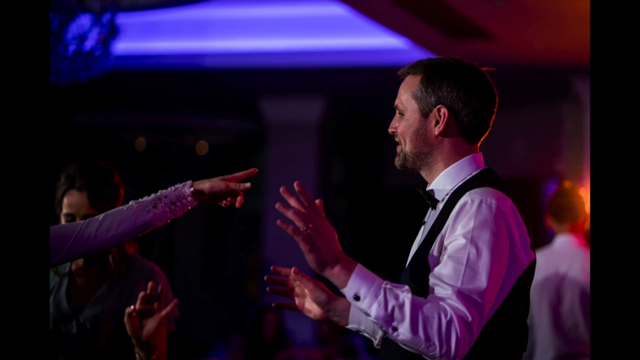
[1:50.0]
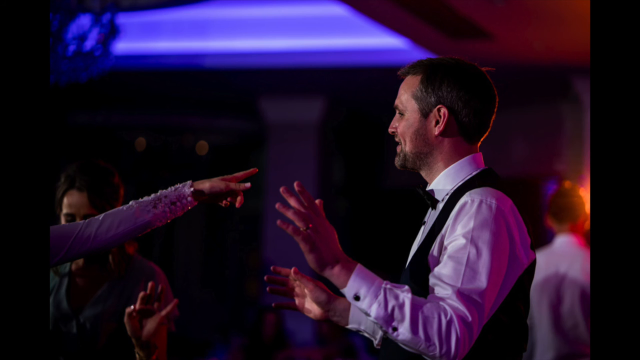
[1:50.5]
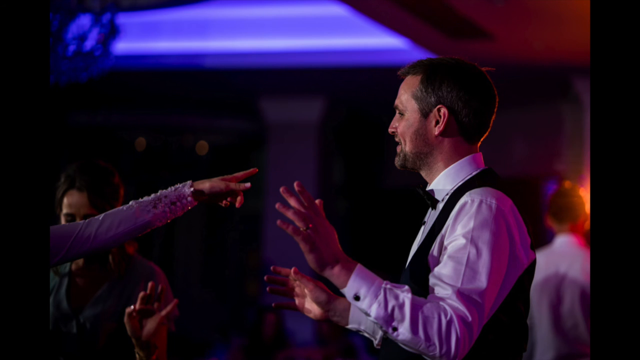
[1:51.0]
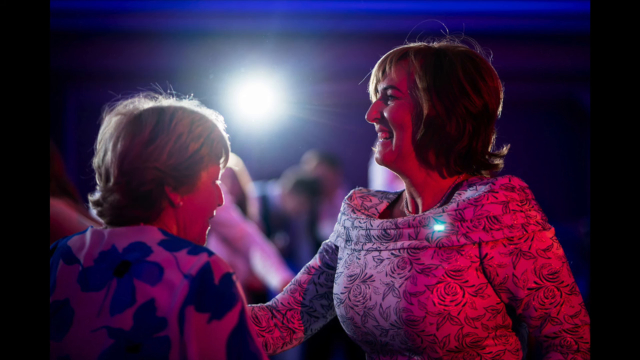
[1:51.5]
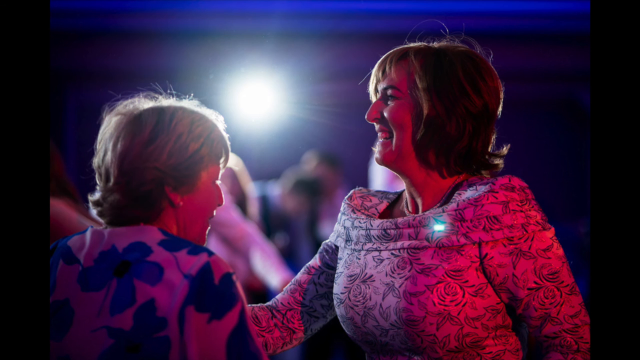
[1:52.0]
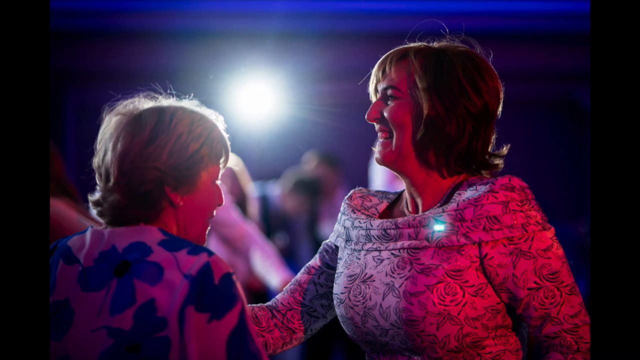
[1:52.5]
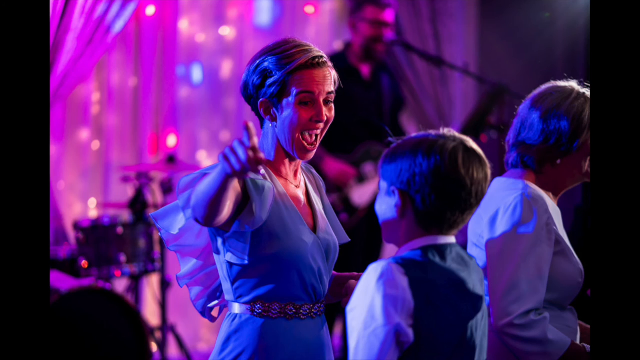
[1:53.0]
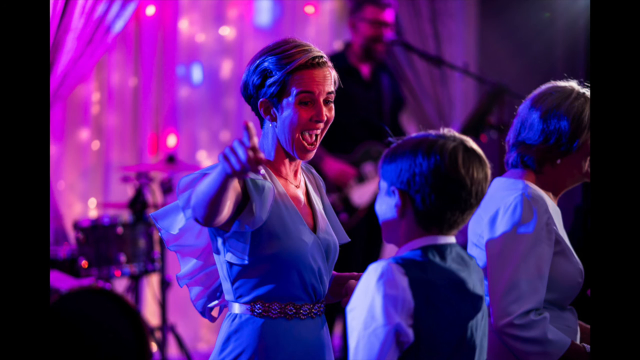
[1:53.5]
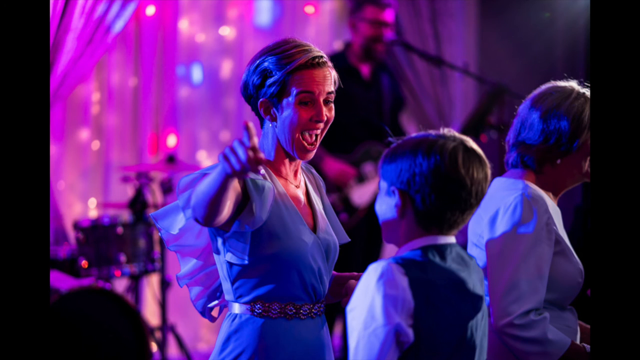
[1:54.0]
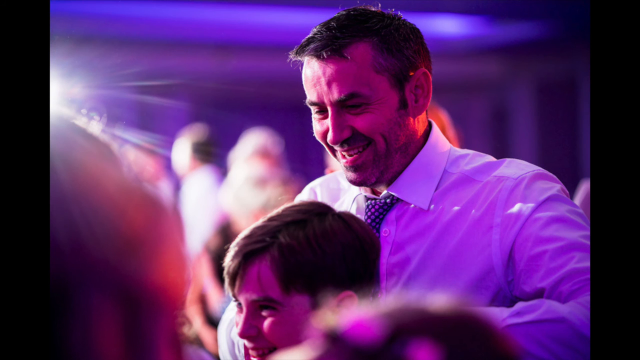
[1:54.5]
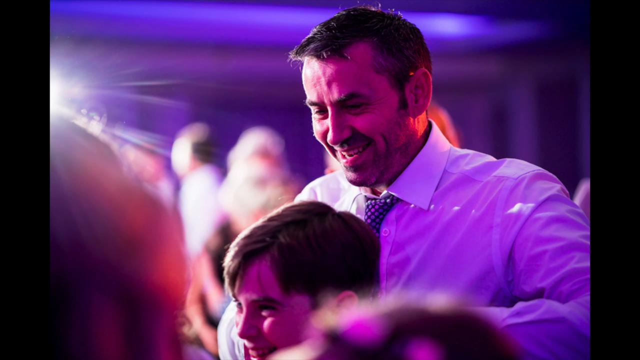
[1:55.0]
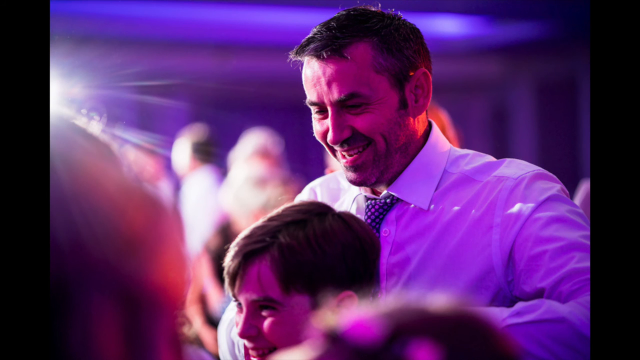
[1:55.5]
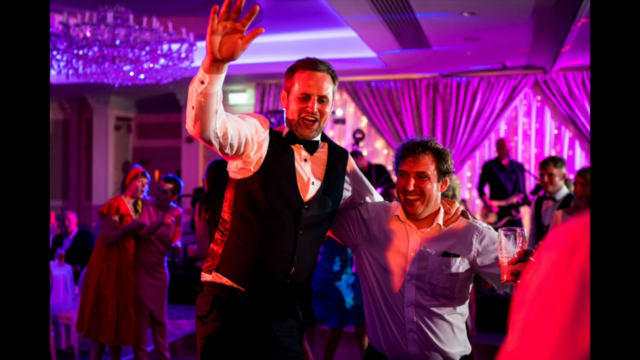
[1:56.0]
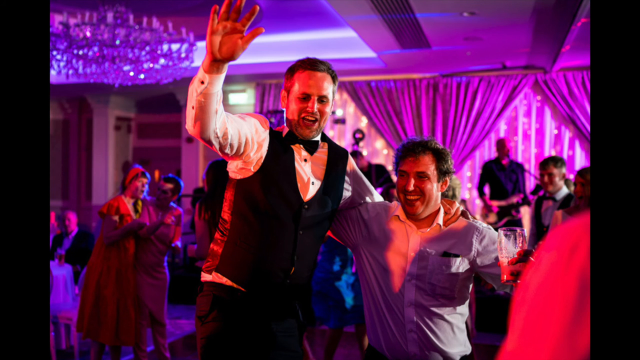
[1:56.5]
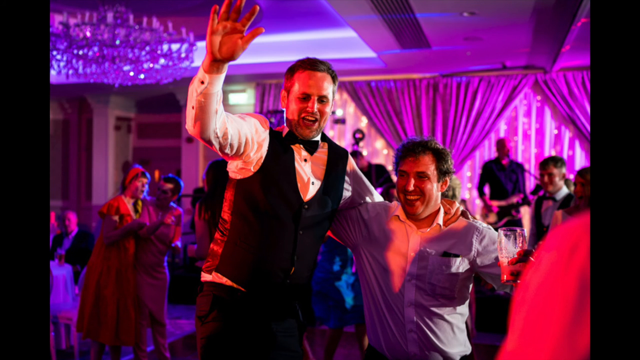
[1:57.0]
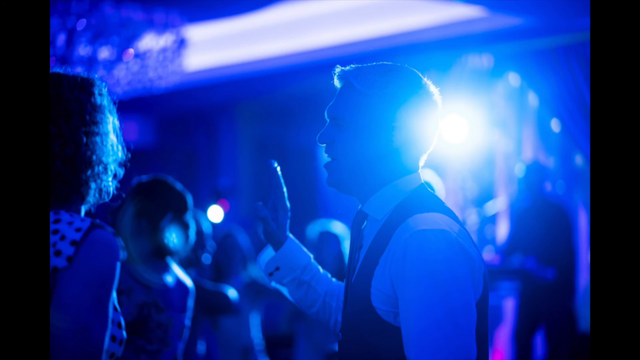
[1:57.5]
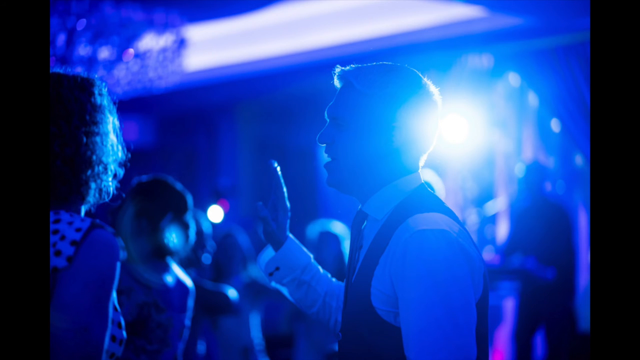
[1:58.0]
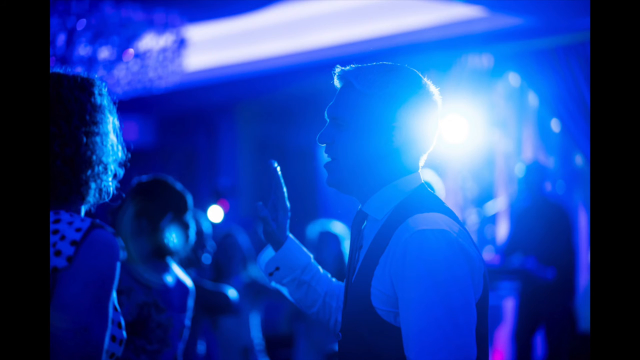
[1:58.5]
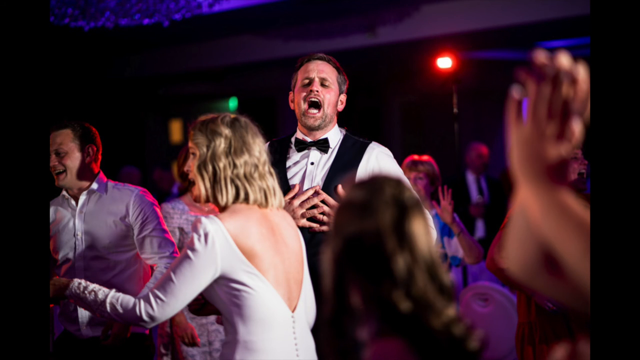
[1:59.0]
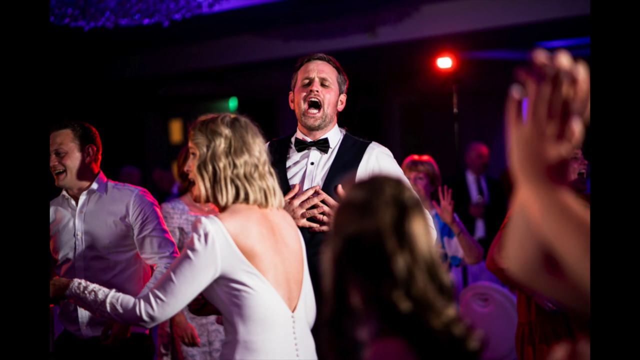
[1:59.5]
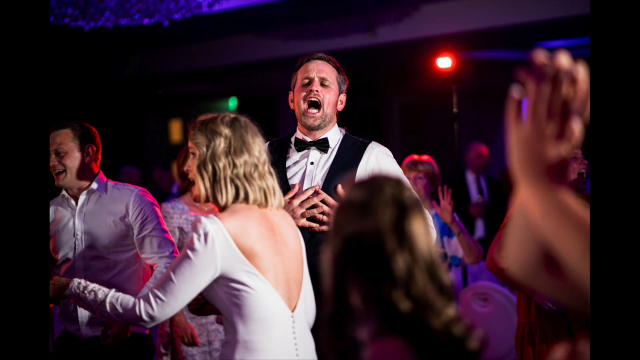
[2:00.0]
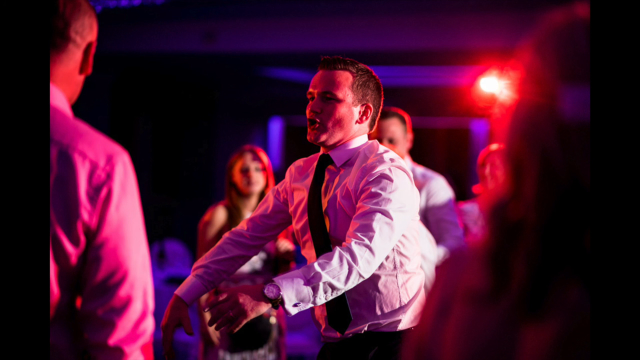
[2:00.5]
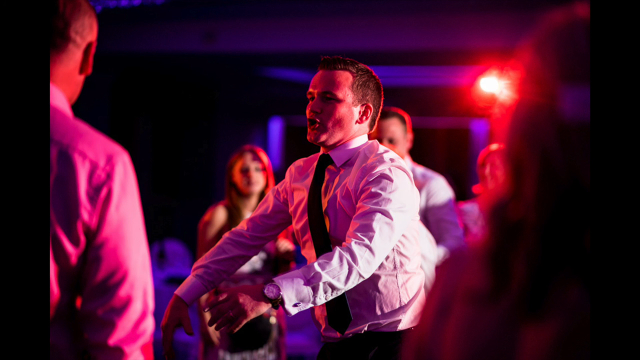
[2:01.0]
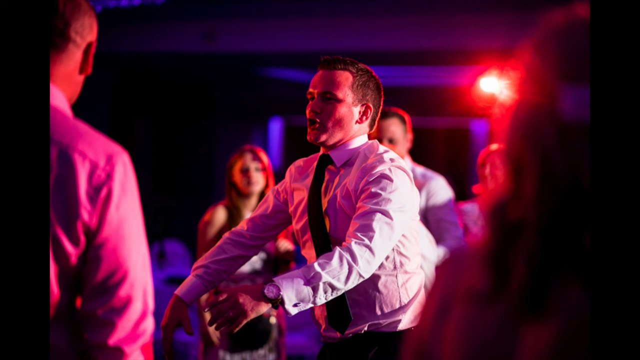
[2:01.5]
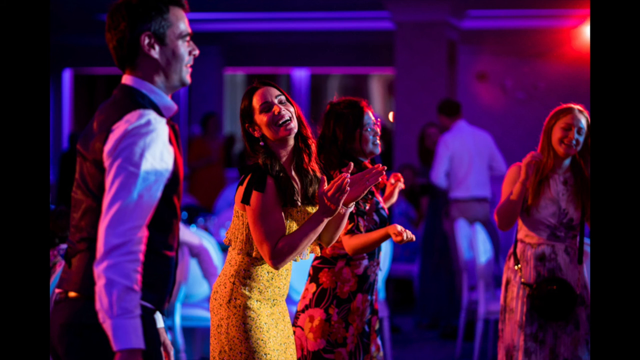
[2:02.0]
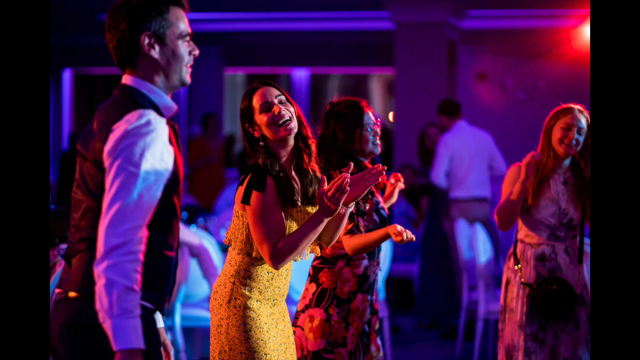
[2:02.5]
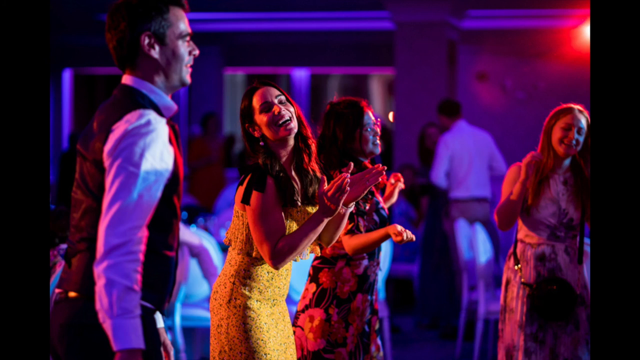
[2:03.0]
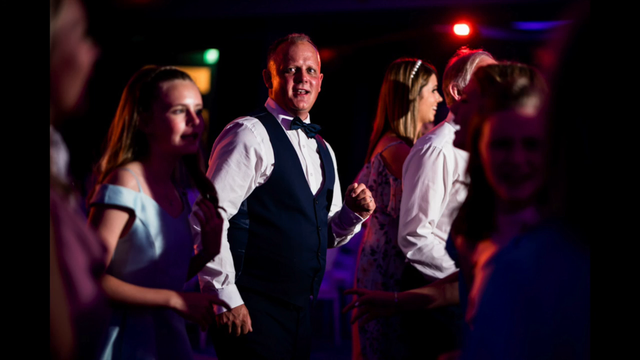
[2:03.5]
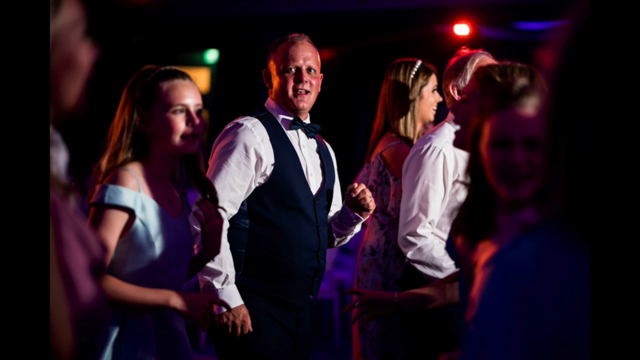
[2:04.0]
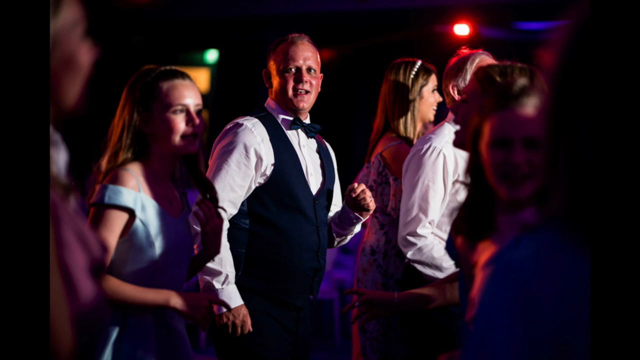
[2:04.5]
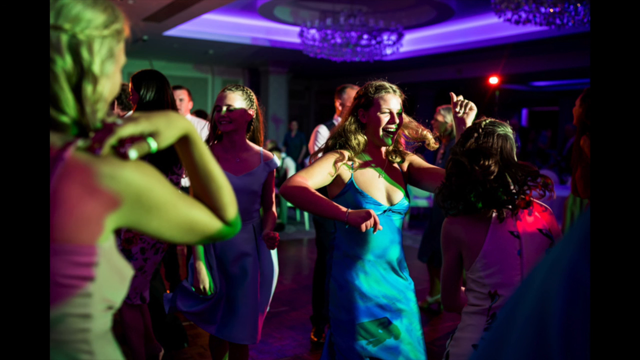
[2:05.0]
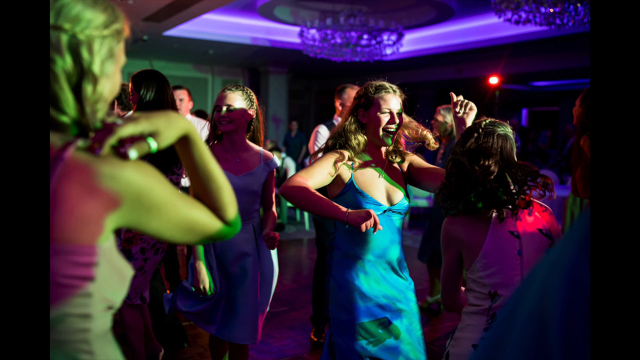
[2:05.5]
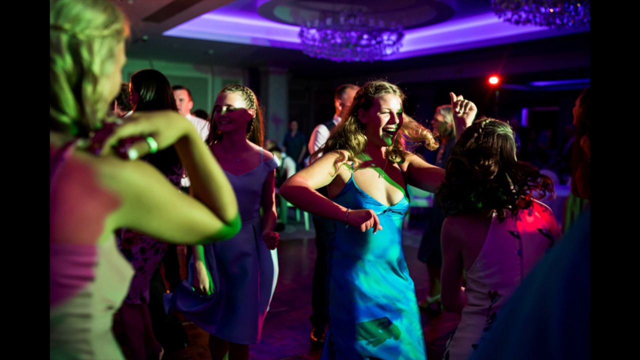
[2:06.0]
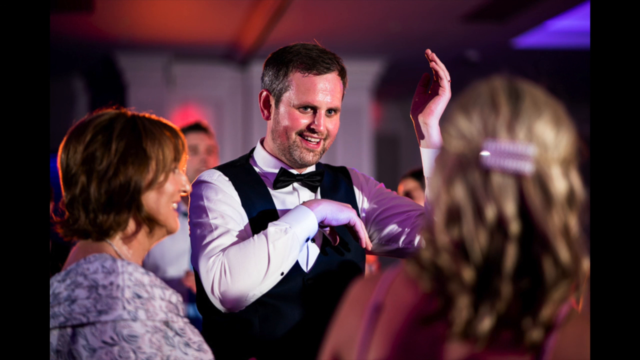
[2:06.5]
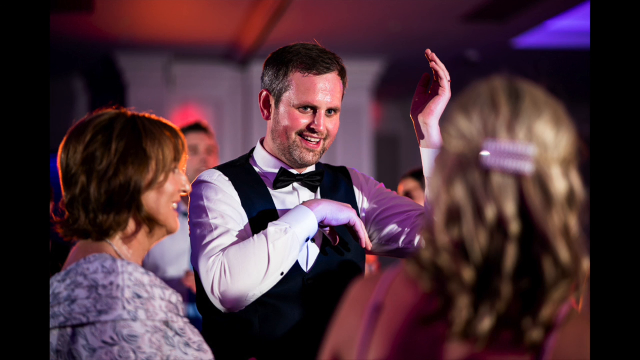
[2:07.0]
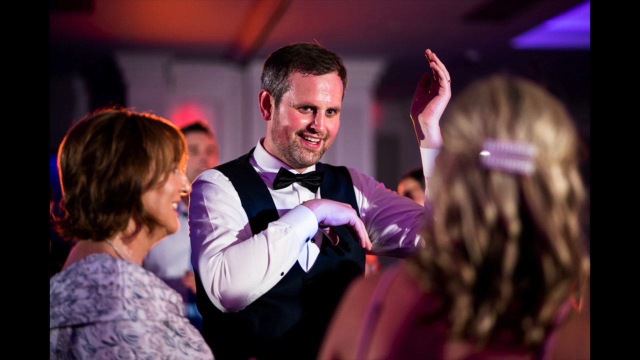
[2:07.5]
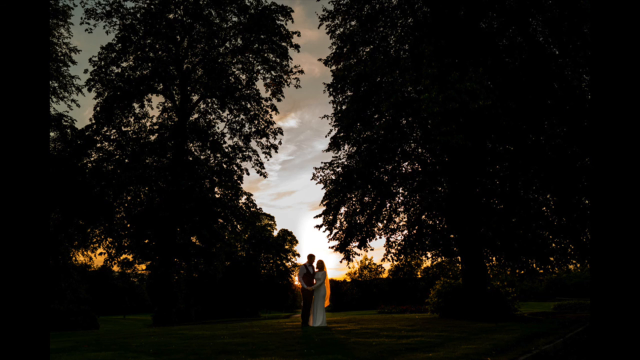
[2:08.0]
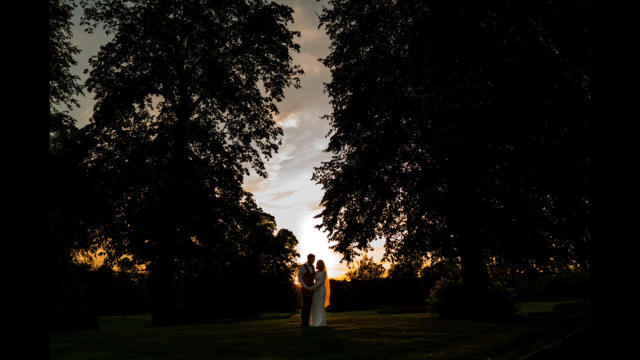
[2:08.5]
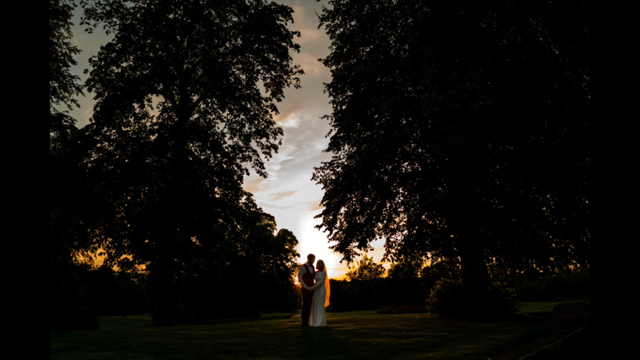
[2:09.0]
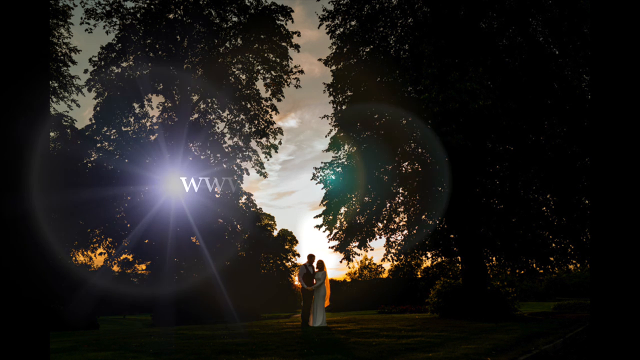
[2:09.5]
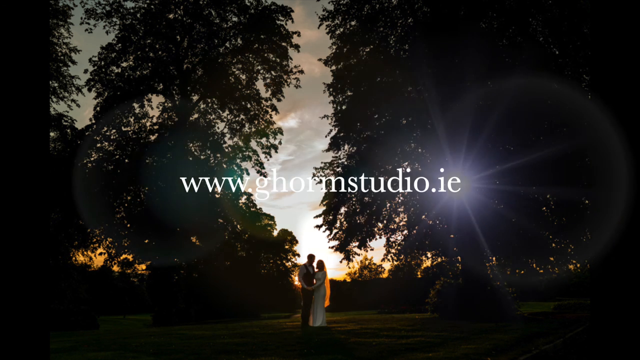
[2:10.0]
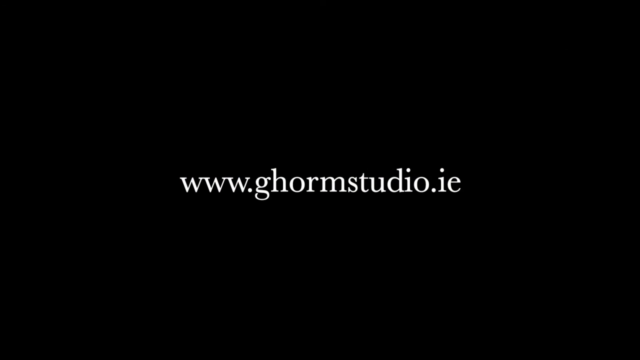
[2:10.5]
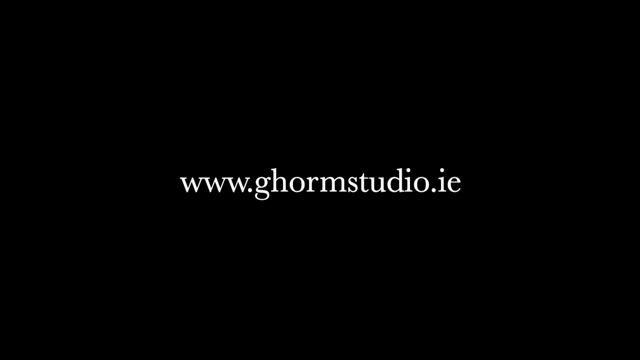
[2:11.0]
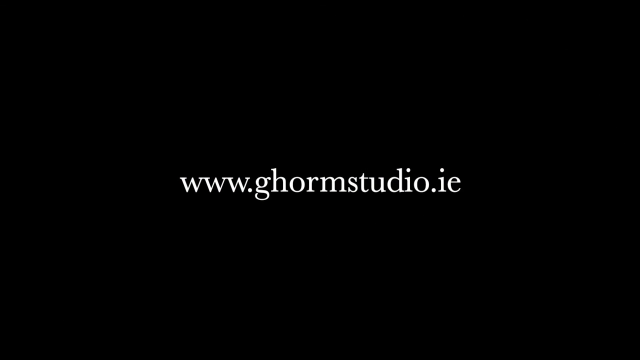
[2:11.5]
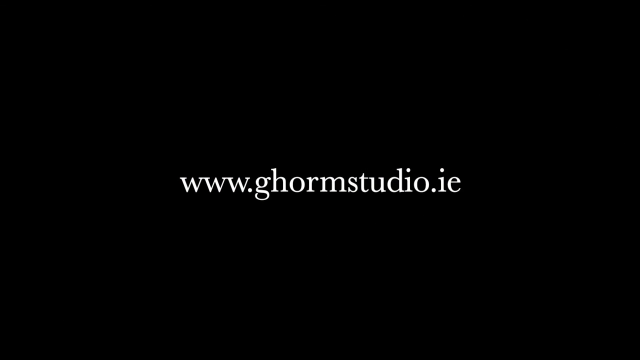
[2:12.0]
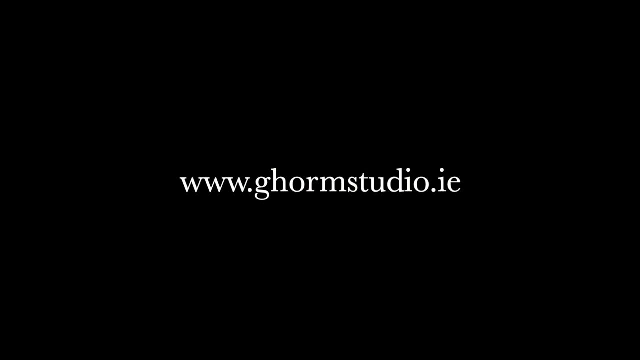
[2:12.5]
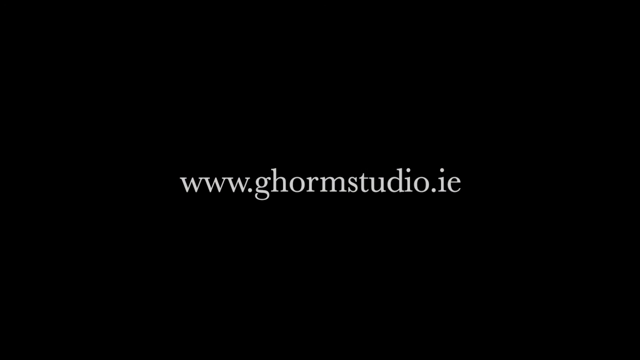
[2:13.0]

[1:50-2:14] At the reception it is dark, with colorful lights on. The band plays and everyone is on the dance floor: jackets are off, hands are moving, and people are singing. The groom sings and the bride, in the same dress, dances. The groomsmen and guests cut loose on the floor under bright spotlights, all sweaty, and even the kids are out on the dance floor. The lights change colors, including blue and yellow. The video ends with the couple standing outside at sunset as a strobe of light wraps around them, followed by the studio's website. The video is mostly a compilation of candid photos, with not much of the bridal party, the band or the decorations.